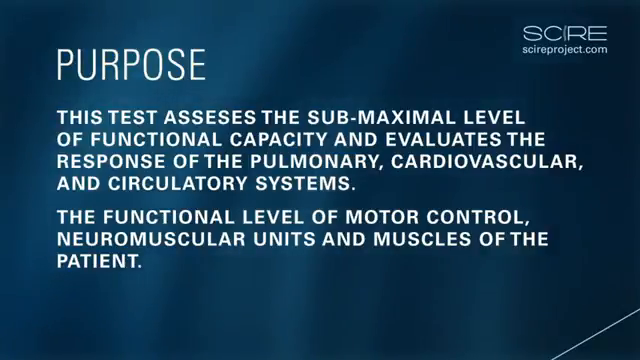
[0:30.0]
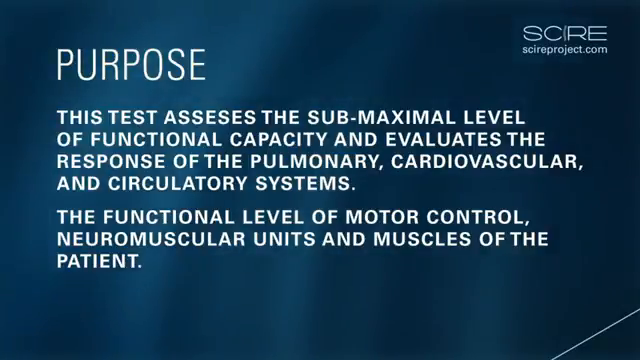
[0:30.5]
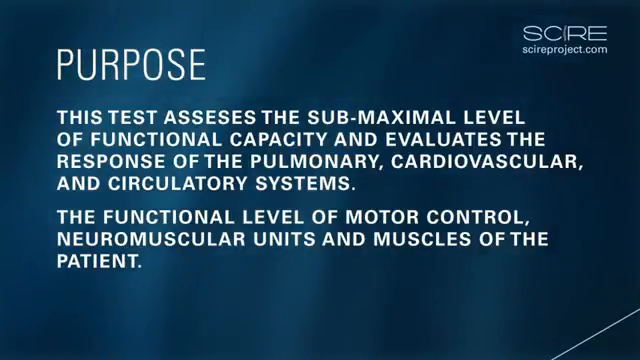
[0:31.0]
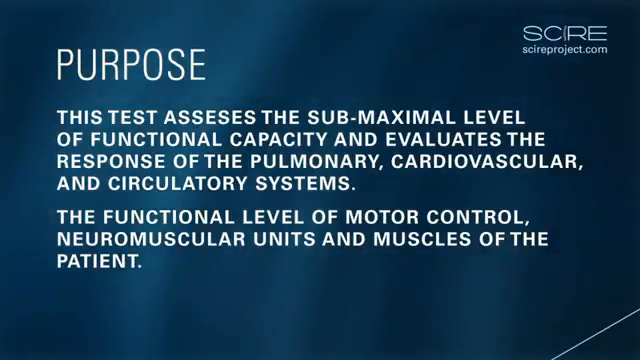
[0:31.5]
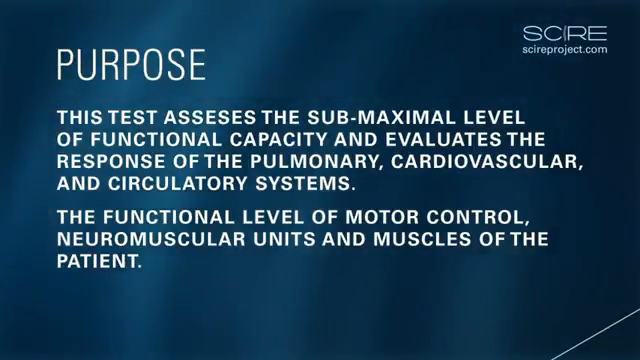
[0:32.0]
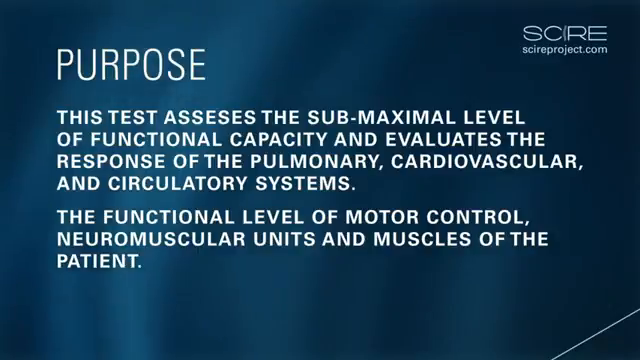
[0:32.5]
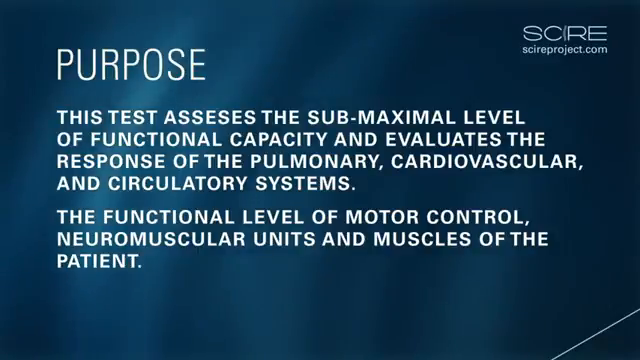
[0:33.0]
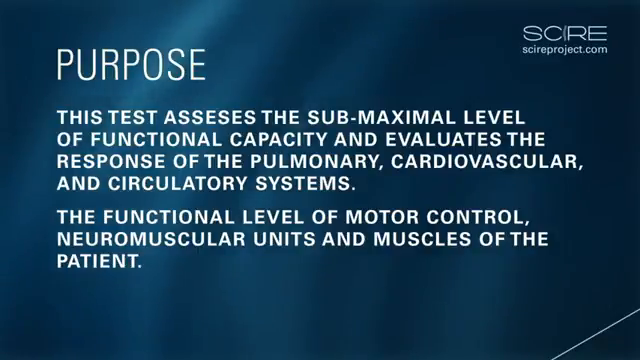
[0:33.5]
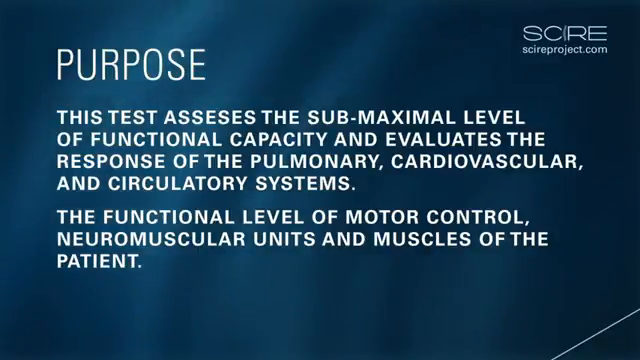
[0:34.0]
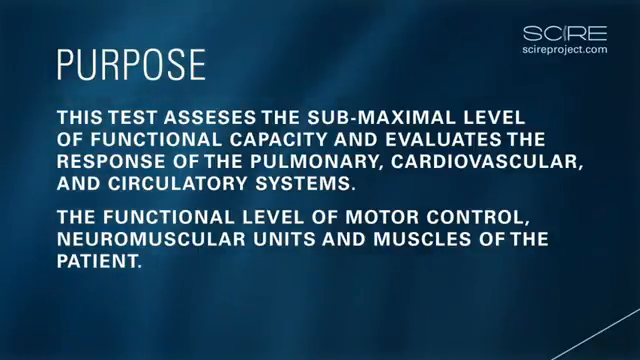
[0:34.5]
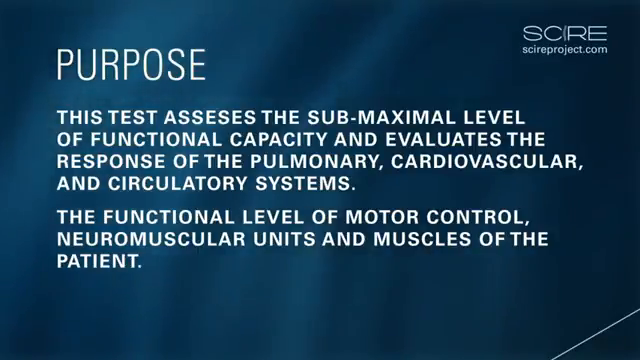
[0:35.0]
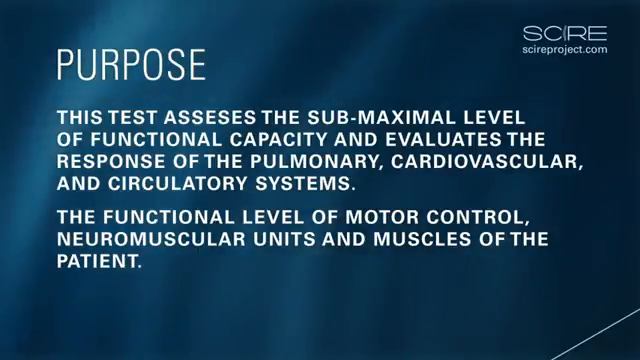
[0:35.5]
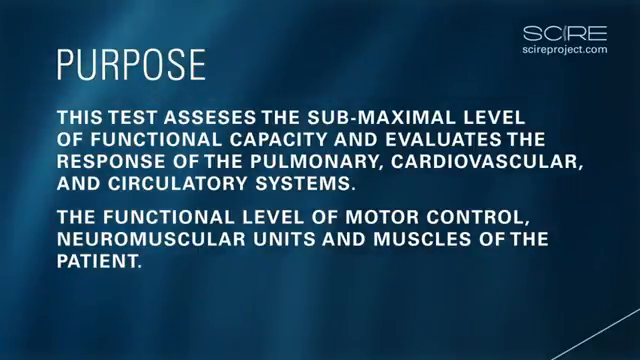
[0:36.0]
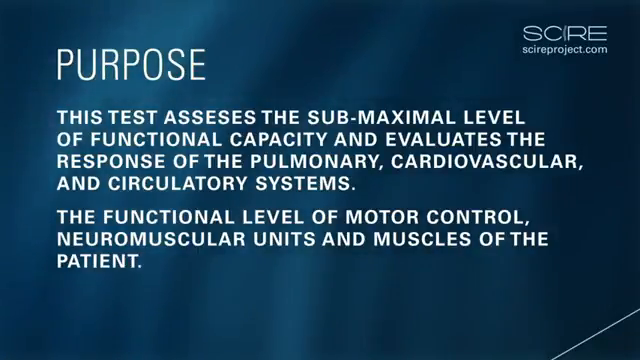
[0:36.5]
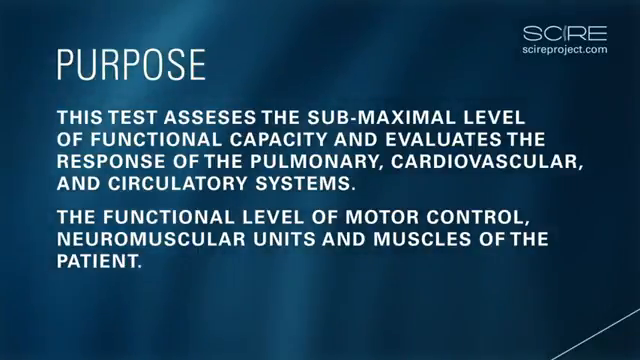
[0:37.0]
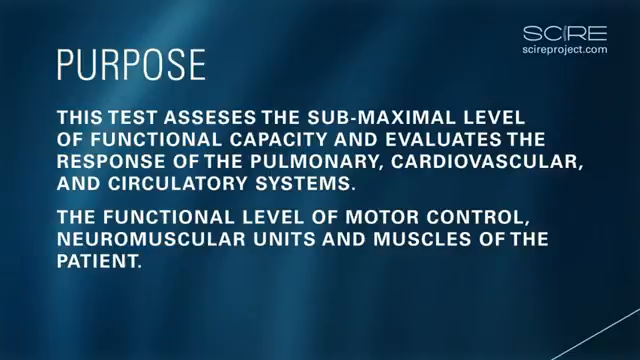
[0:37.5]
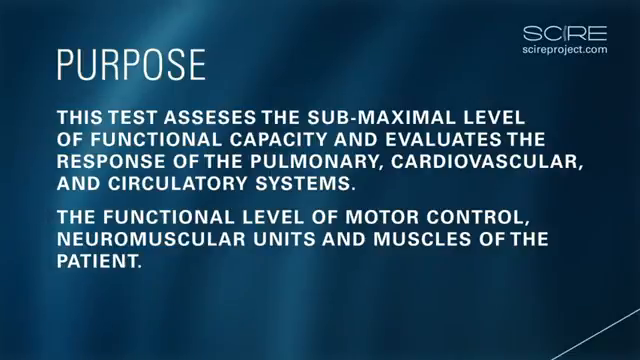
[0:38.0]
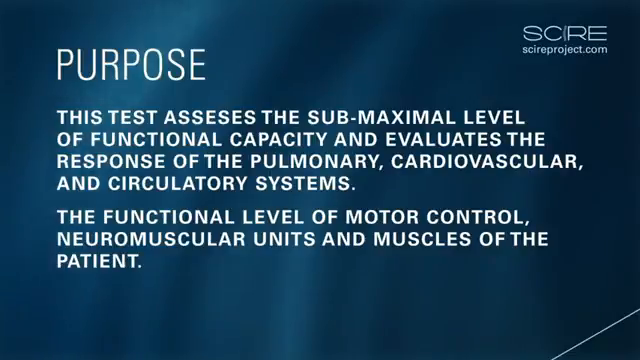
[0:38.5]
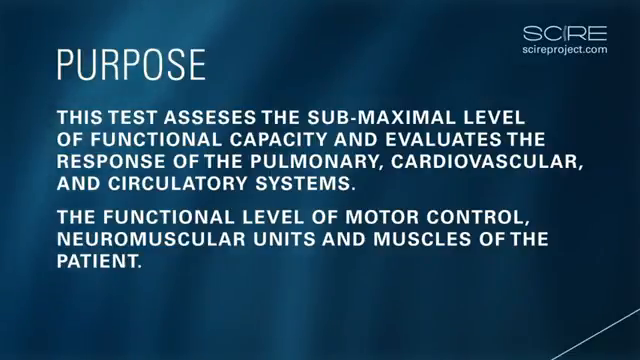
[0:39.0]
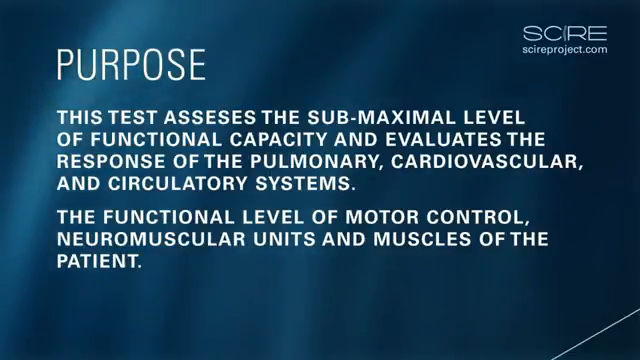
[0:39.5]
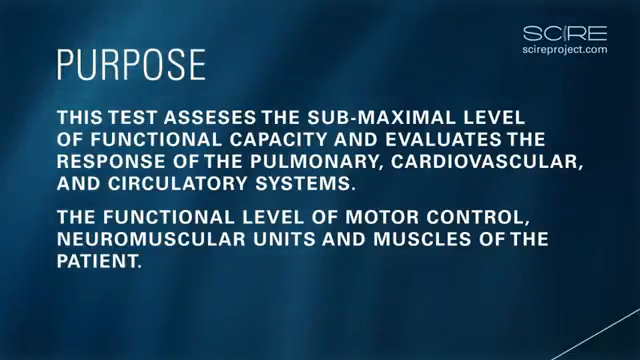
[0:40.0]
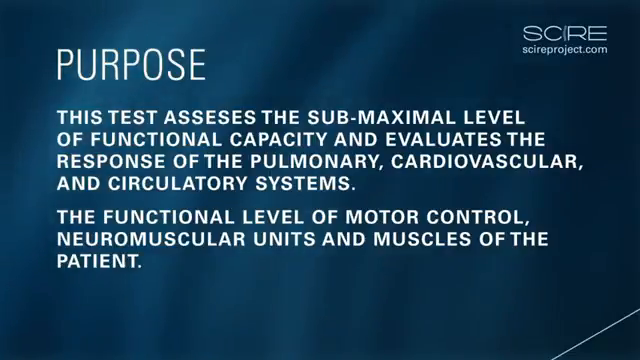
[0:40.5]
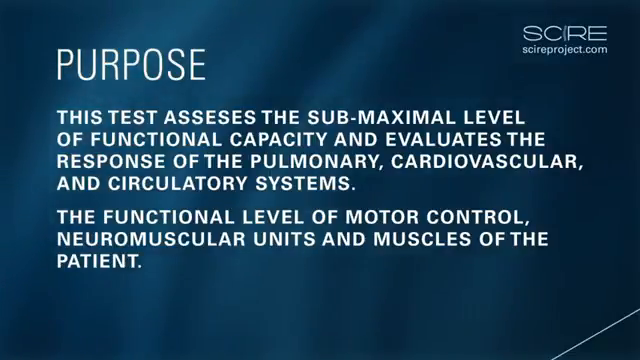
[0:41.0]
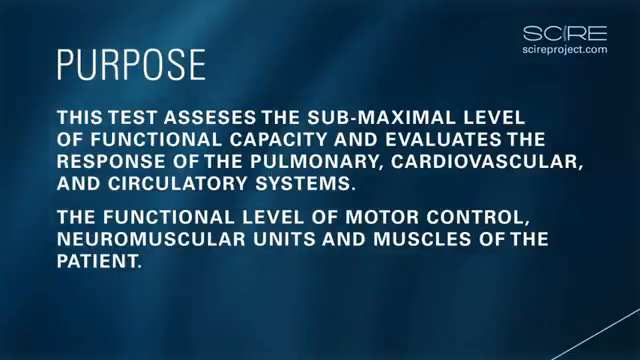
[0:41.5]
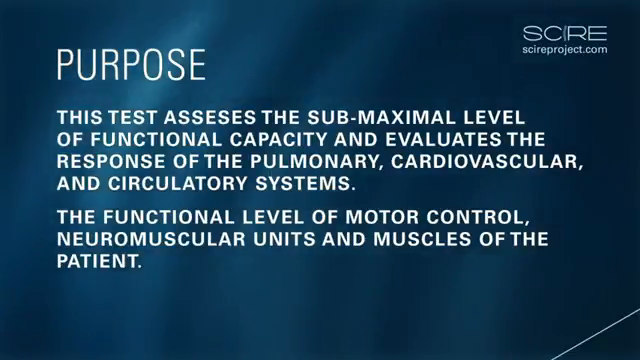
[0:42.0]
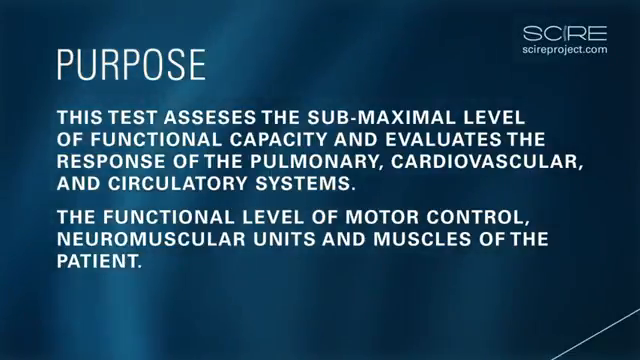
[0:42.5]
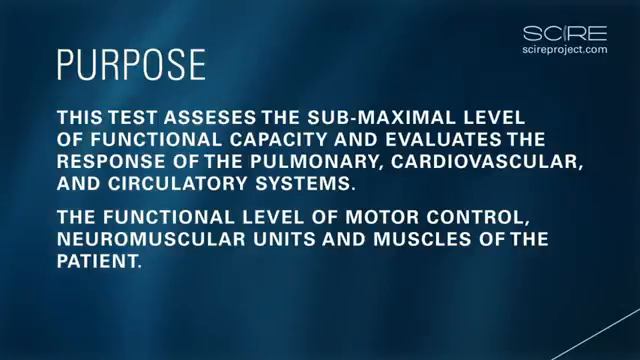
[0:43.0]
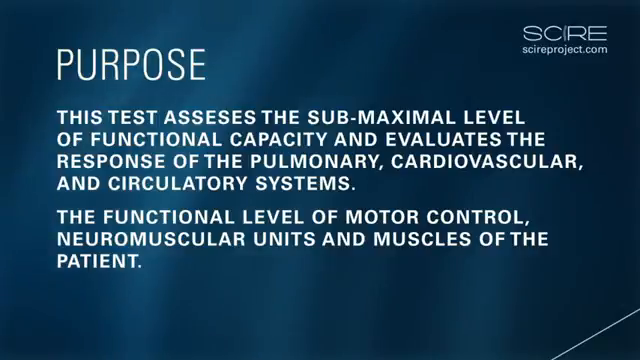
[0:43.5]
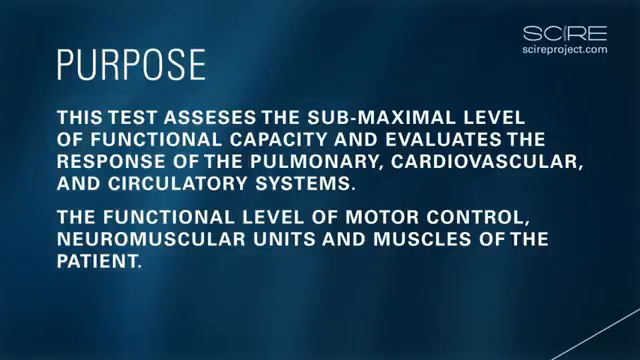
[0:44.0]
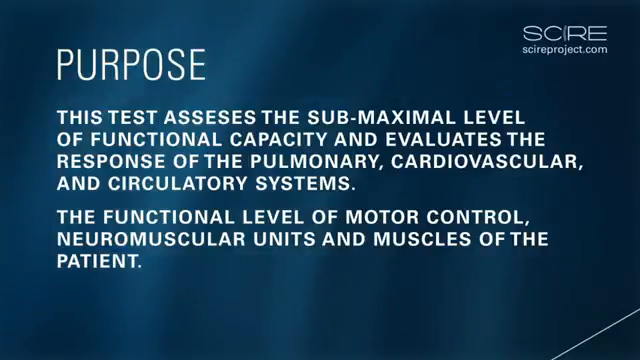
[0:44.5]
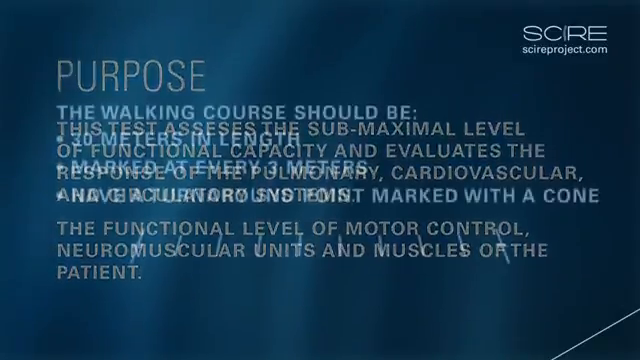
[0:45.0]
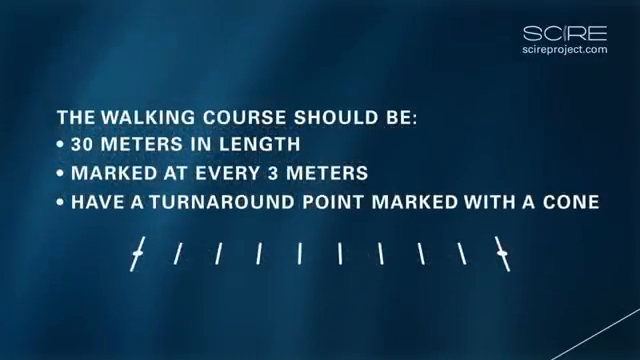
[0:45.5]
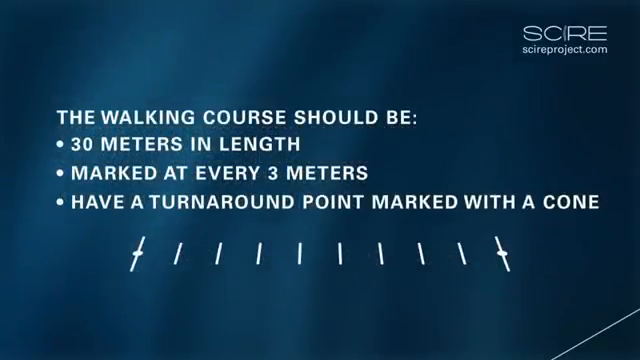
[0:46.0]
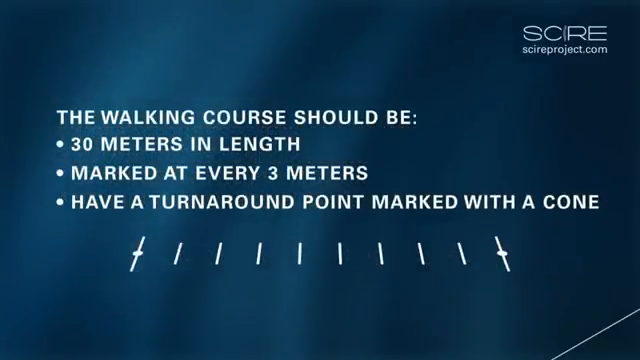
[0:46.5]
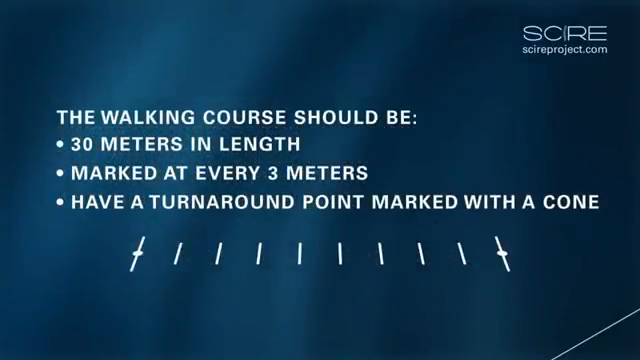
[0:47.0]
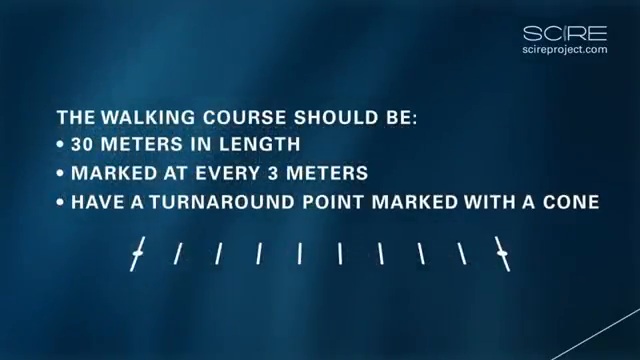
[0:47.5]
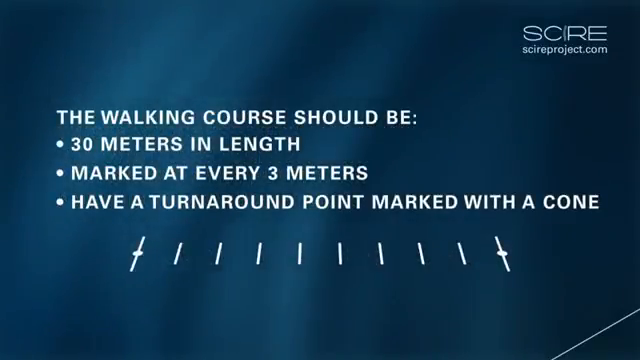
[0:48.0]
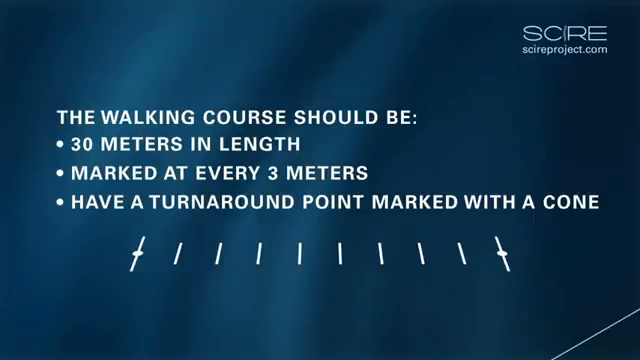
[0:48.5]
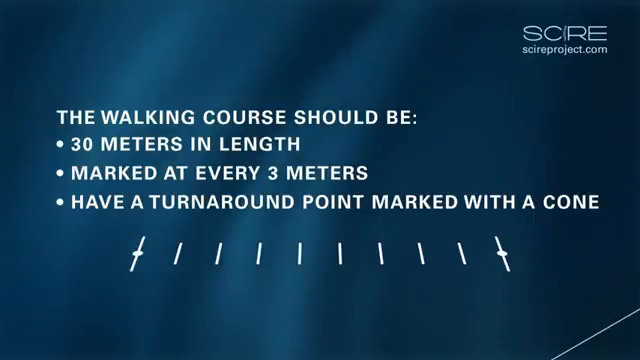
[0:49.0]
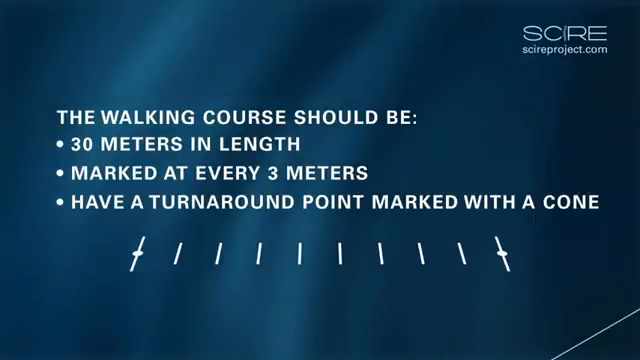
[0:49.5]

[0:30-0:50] The "purpose" text stays on screen, still reading "this test assesses the submaximal level of functional capacity and evaluates the response of the pulmonary, cardiovascular and circulatory systems. The functional level of motor control, neuromuscular units and muscles of the patient"; the word "assesses" appears to be misspelled. It remains on screen for about 15 seconds. Text then states that the walking course should be 30 meters in length, marked at every three meters, and have a turnaround point marked with a cone. Underneath this, 10 small vertical lines like little dashes are on the floor, signifying marks three meters apart, so the distance shown is 30 meters with a line every three meters, including zero and 30 at each end of the line at the bottom.